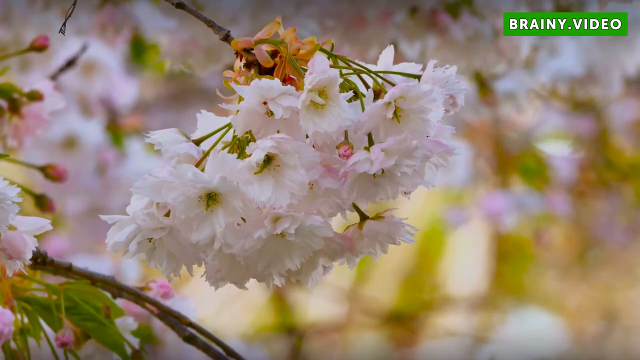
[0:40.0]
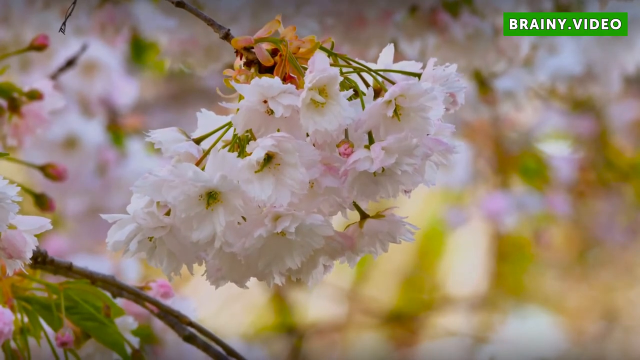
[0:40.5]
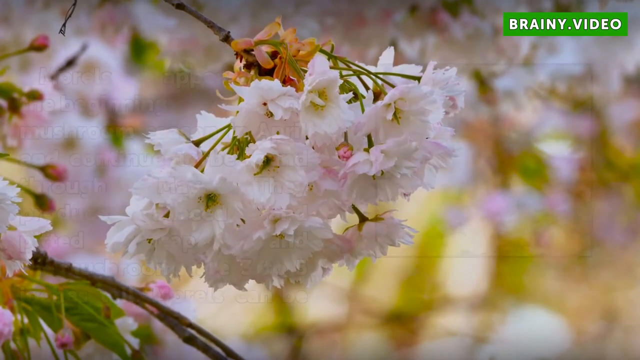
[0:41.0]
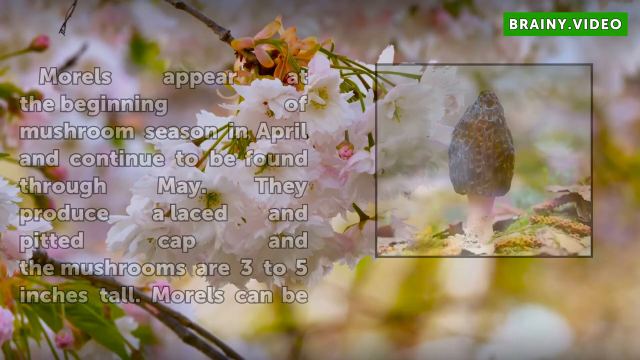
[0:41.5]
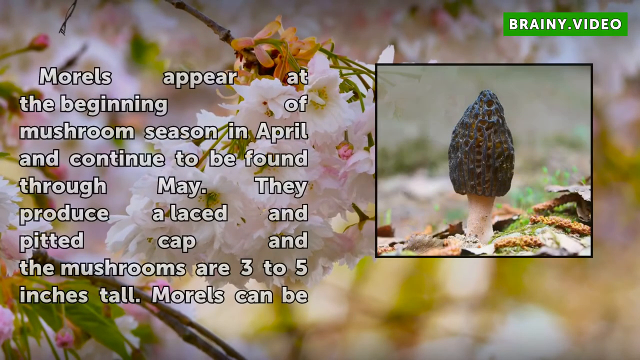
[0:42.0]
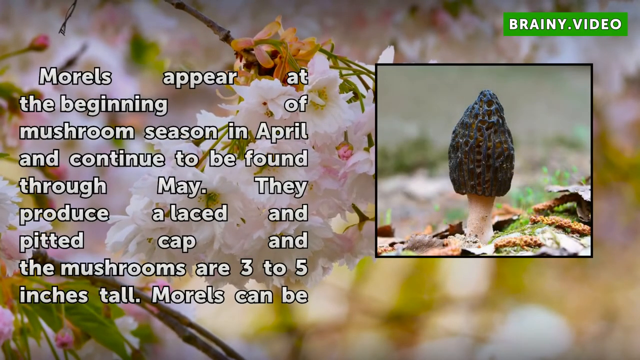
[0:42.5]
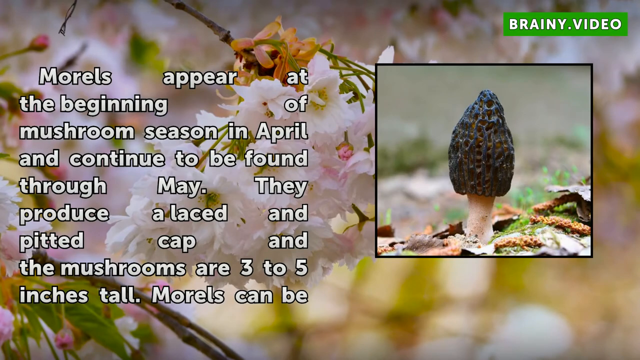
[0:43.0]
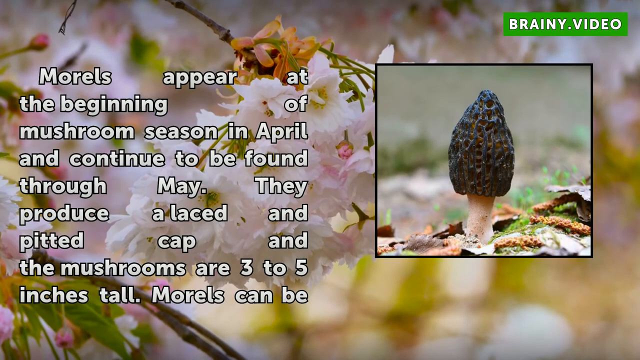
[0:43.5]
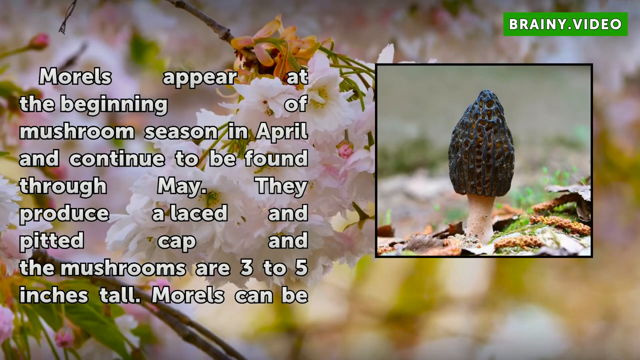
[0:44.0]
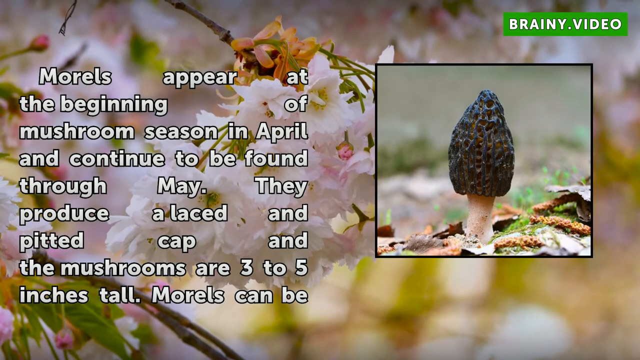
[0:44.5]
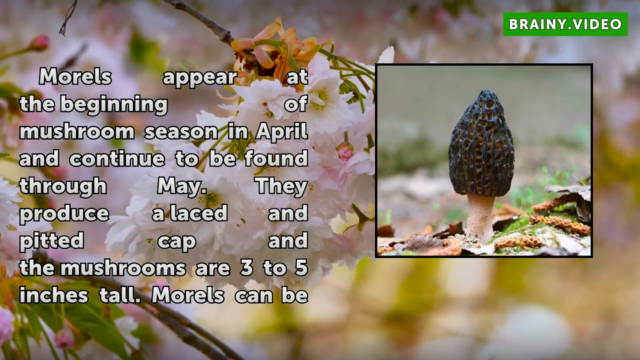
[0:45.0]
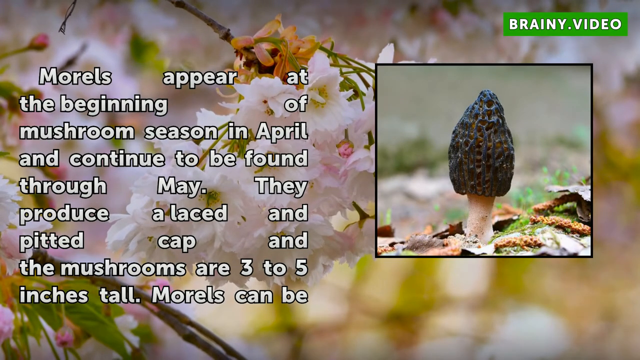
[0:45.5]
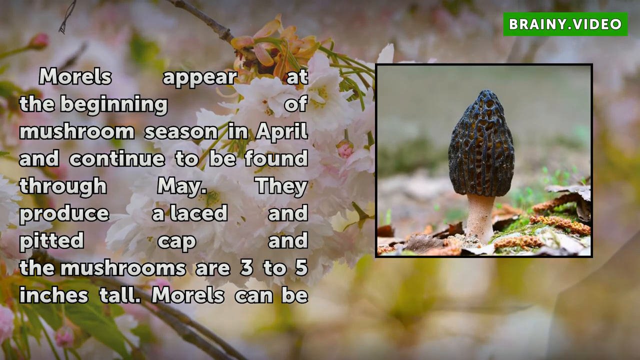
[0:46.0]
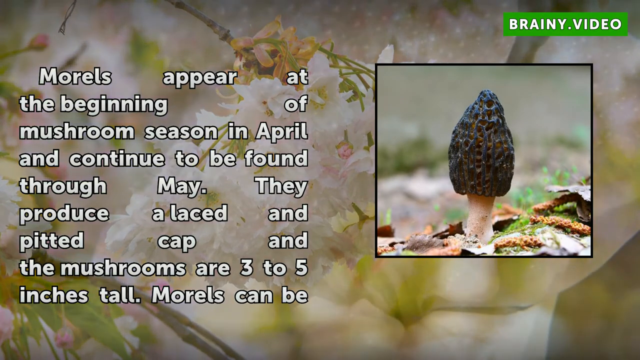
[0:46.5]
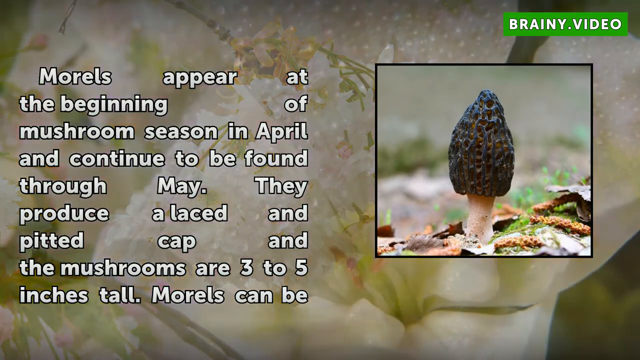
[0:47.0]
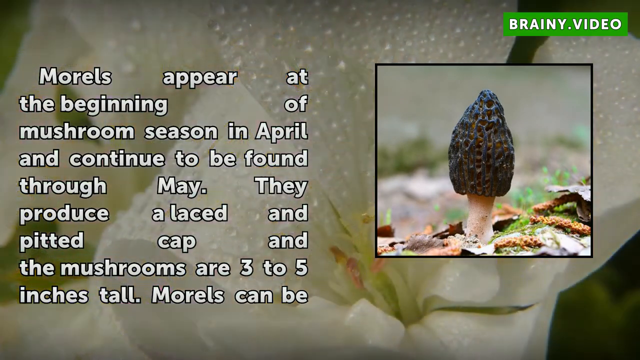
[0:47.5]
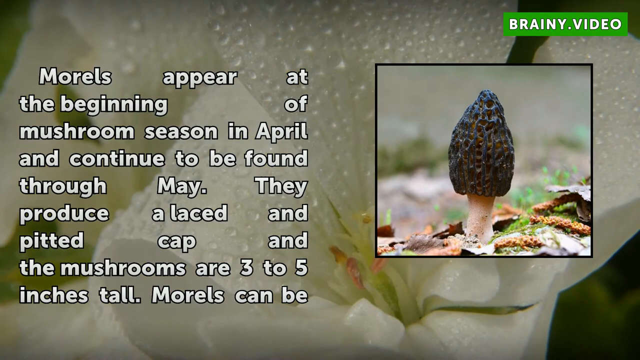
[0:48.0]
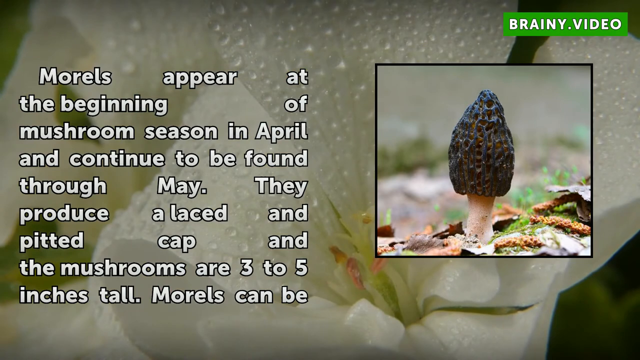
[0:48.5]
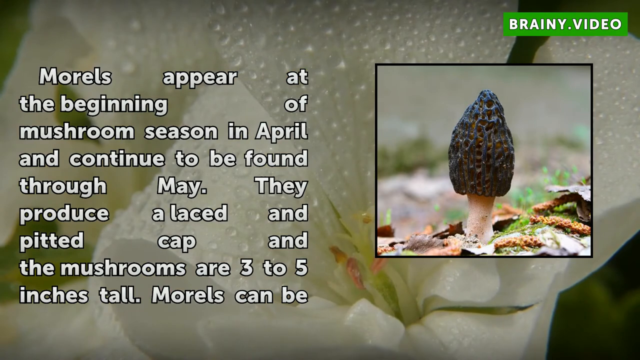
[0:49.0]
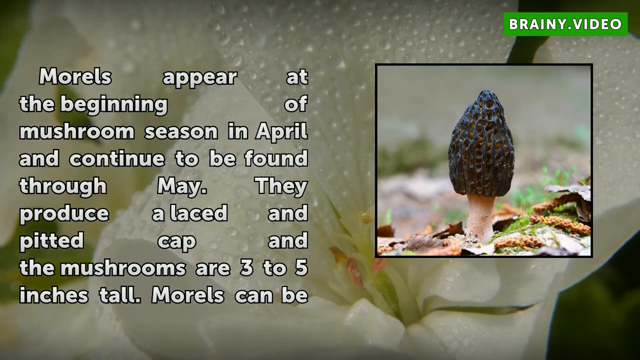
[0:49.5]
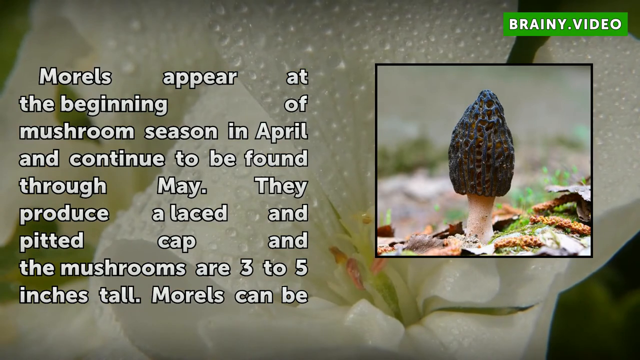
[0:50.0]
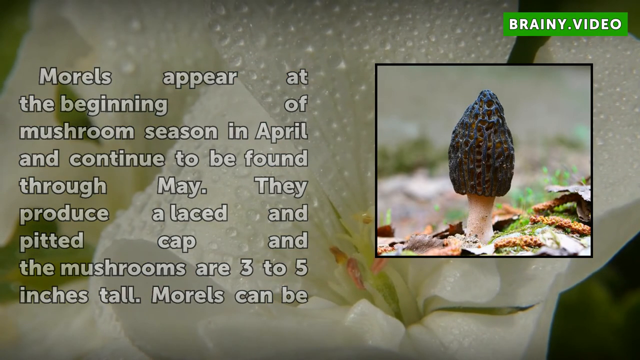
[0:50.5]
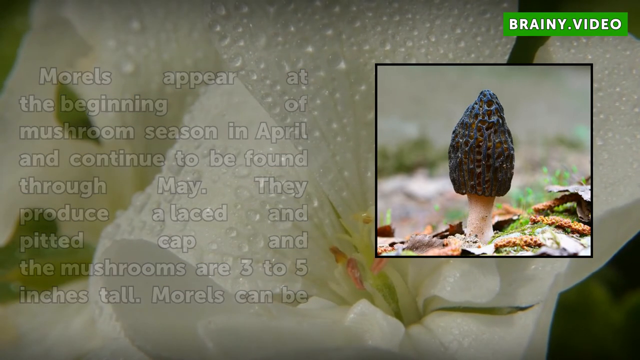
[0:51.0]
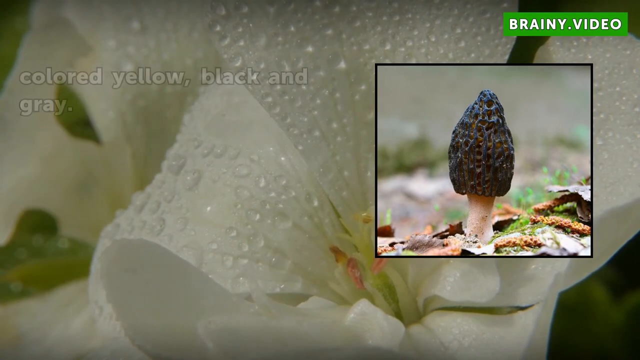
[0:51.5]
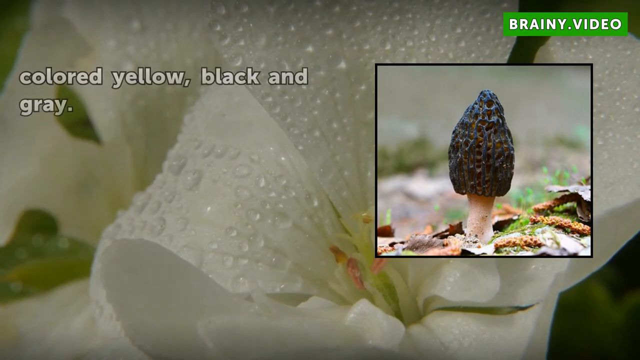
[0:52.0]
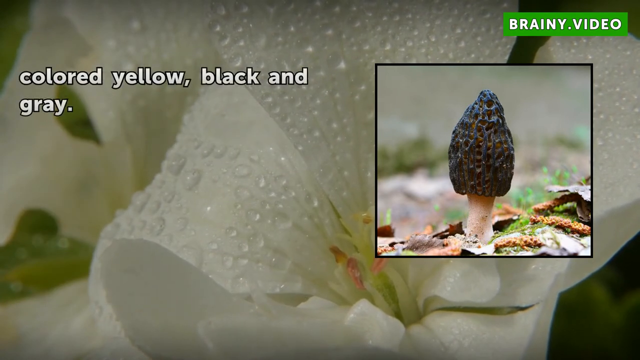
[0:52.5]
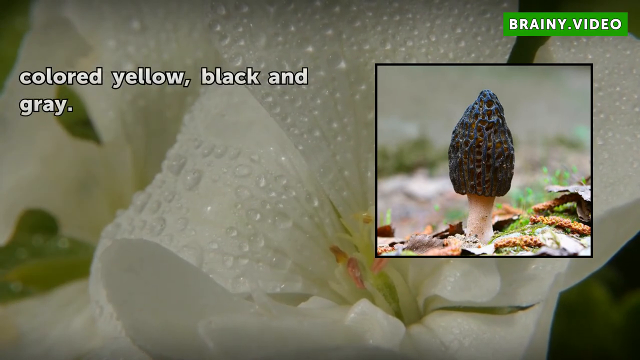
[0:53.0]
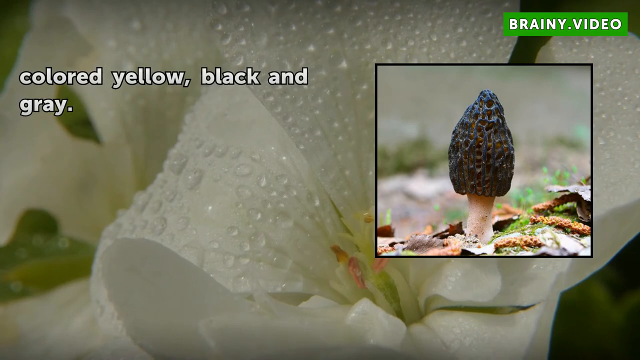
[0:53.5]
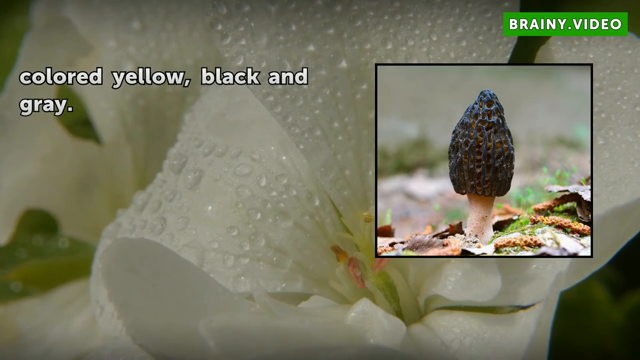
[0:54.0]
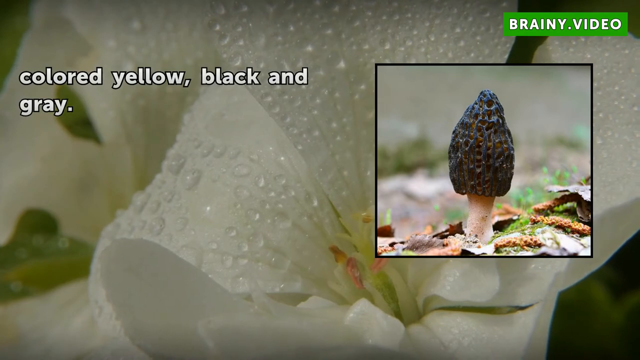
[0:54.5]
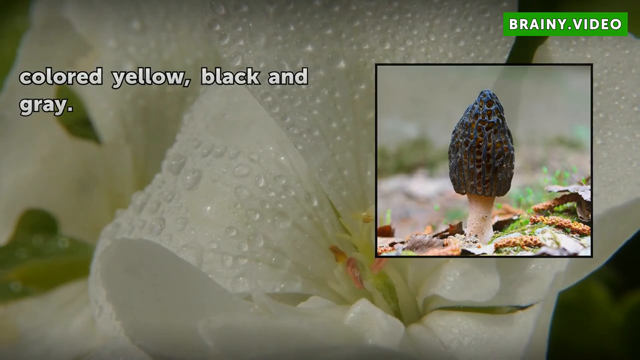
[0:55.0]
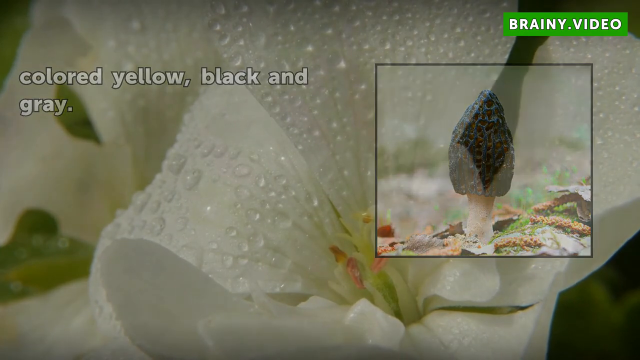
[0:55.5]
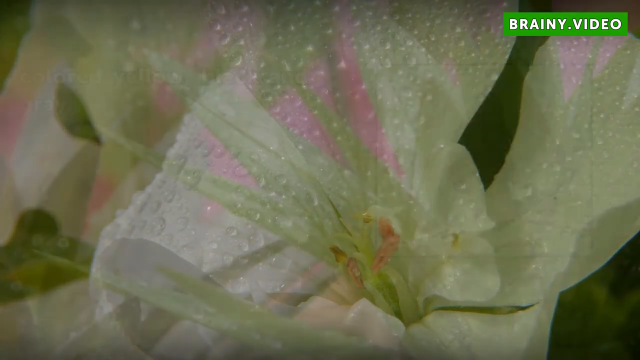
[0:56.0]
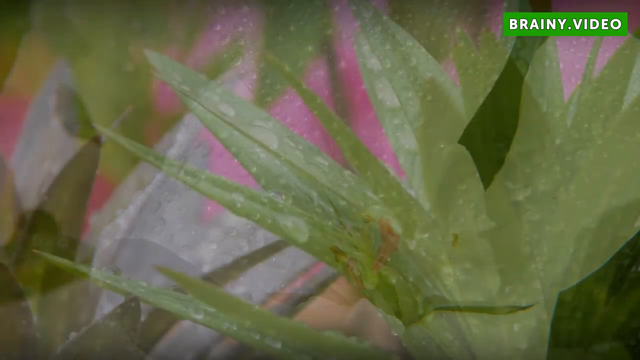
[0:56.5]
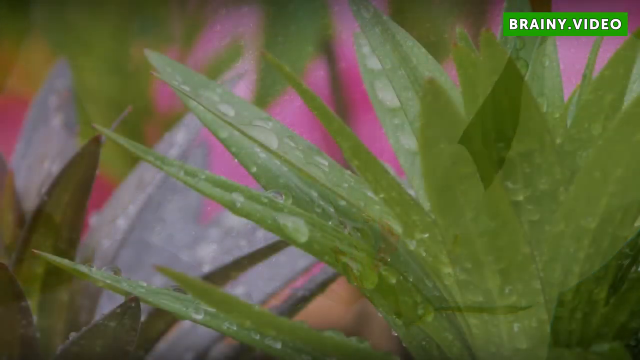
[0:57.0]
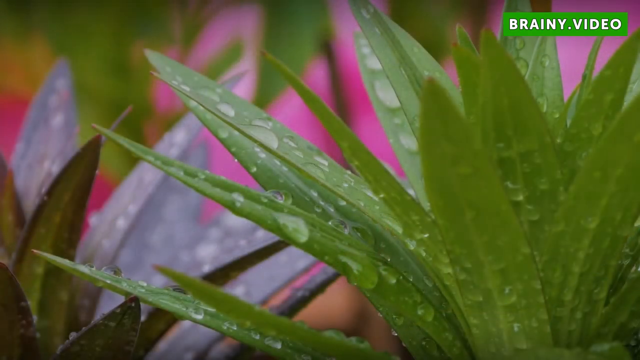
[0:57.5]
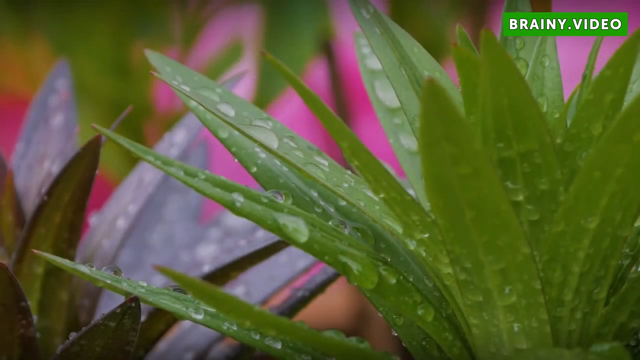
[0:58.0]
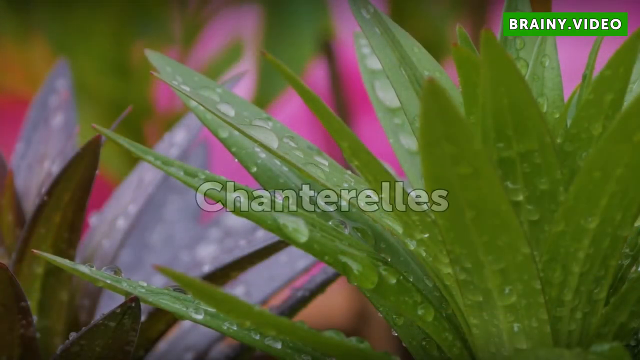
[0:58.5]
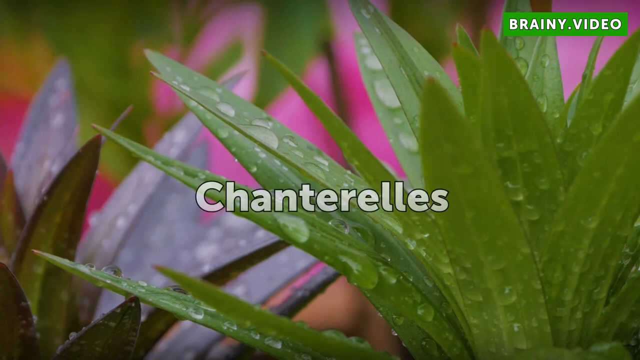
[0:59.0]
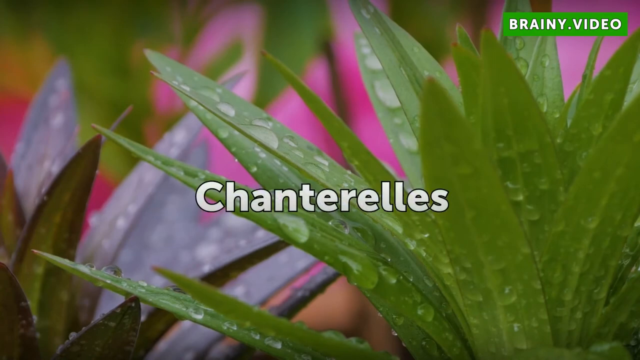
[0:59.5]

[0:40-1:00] A tree with white flowers in it fills the background, with text on the screen that reads: "Morels appear at the beginning of mushroom season in April and continue to be found through May. They produce a laced and pitted cap, and the mushrooms are three to five inches tall." It continues: "Morels can be colored yellow, black, and gray." The background changes to a white flower with water droplets all over its petals. On the right side of the screen is an image of a morel mushroom with a white stem and a black, pitted cap; the inside of the pits appears to be kind of a deep orange. The mushroom grows out of a forest floor, with leaves and forest debris on the floor around it. The background then changes to a healthy-looking aloe plant with water droplets on its leaves, and the word "chanterelles" appears on the screen.